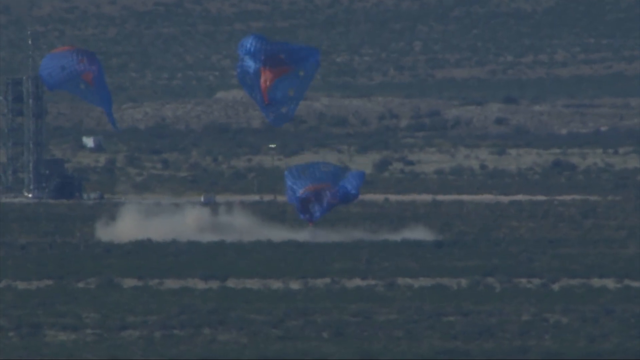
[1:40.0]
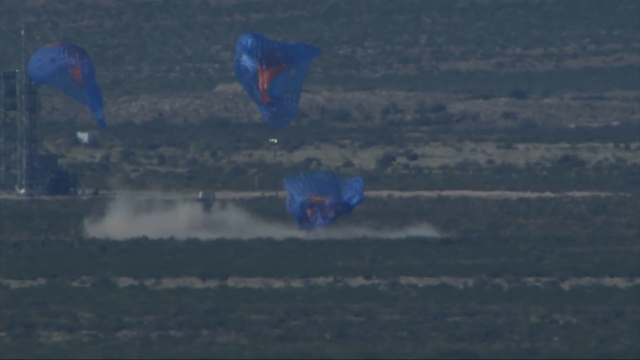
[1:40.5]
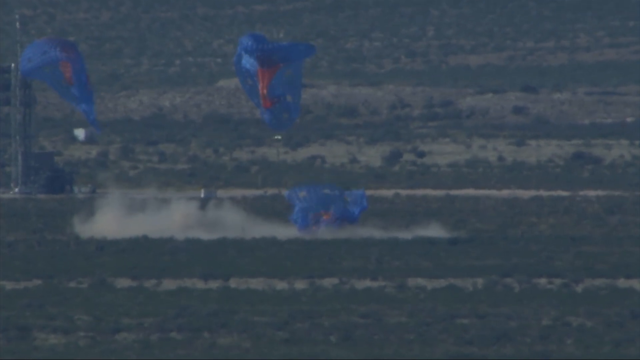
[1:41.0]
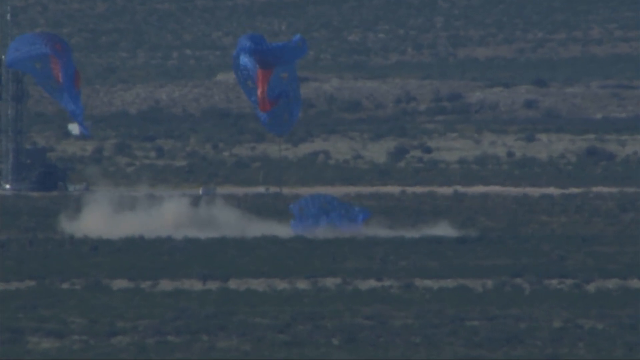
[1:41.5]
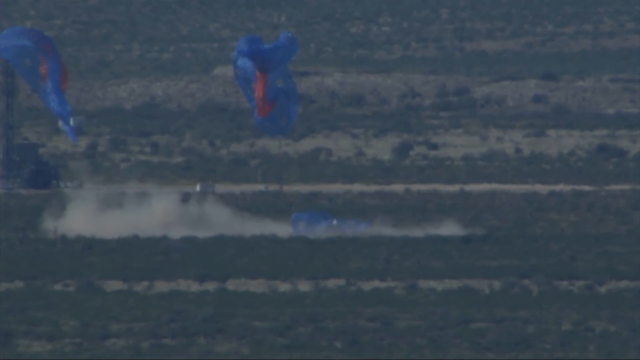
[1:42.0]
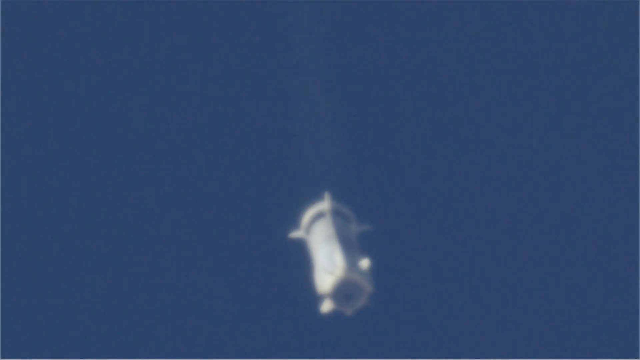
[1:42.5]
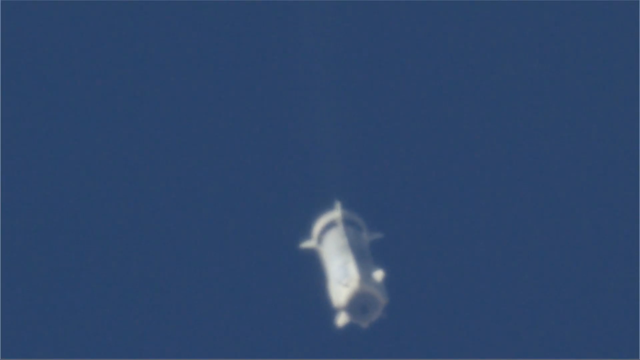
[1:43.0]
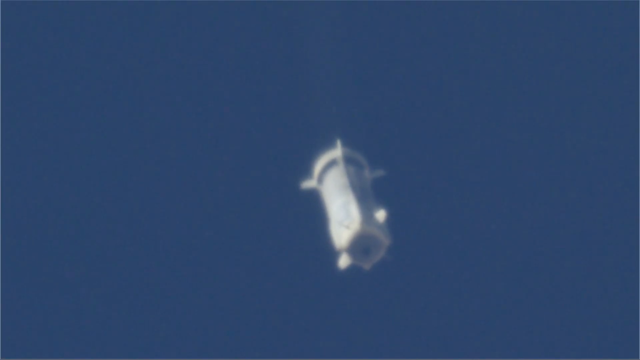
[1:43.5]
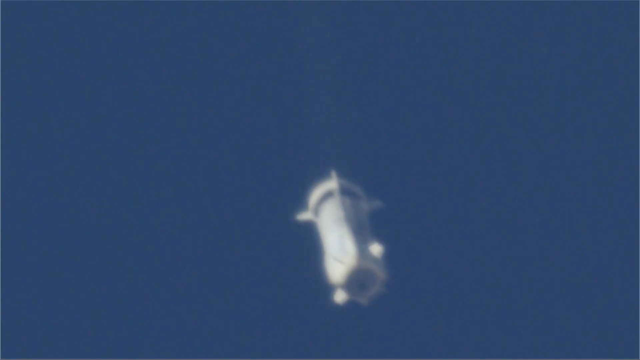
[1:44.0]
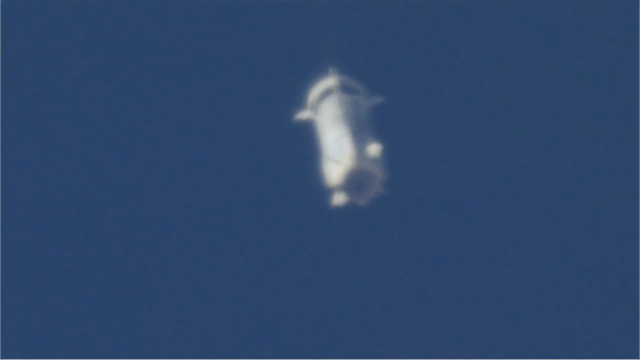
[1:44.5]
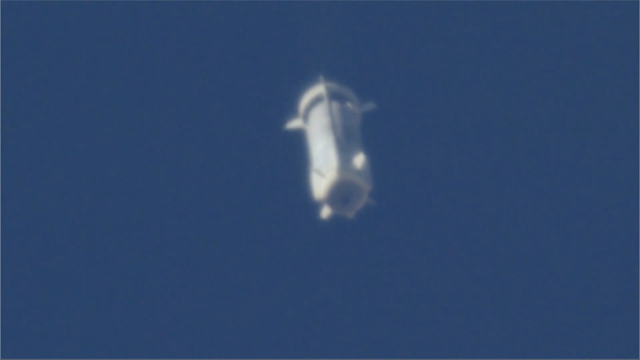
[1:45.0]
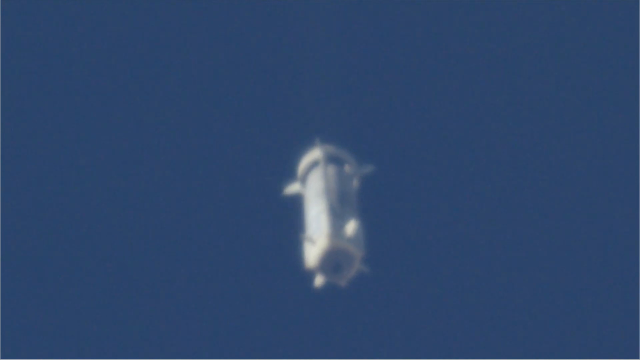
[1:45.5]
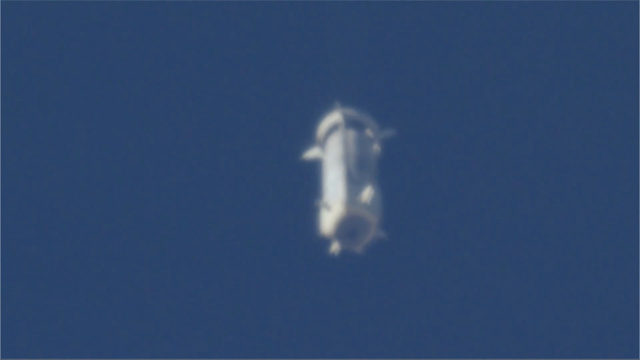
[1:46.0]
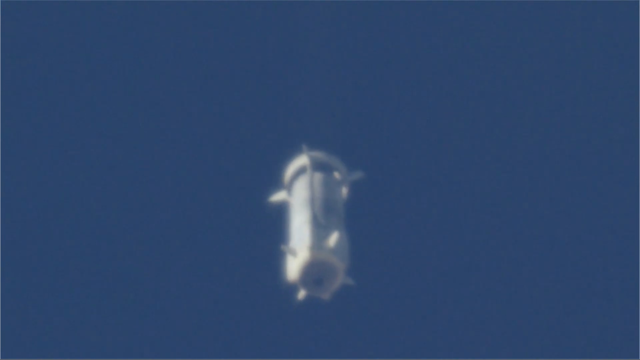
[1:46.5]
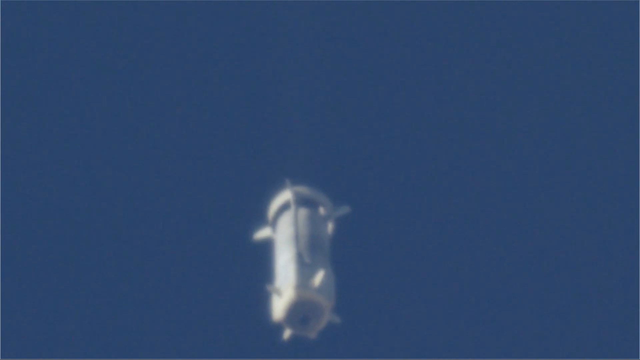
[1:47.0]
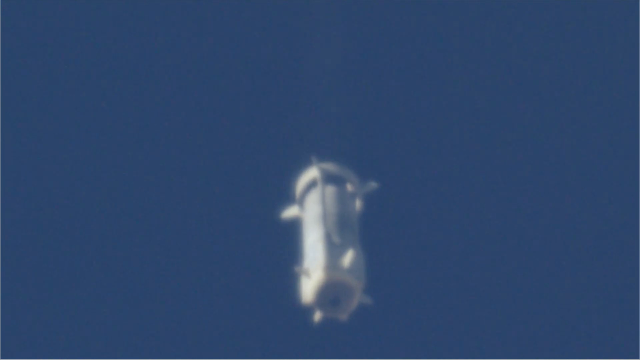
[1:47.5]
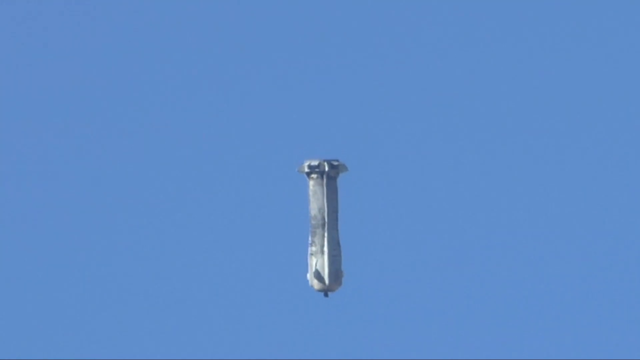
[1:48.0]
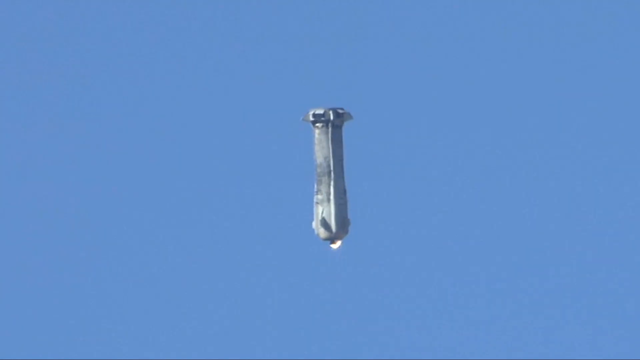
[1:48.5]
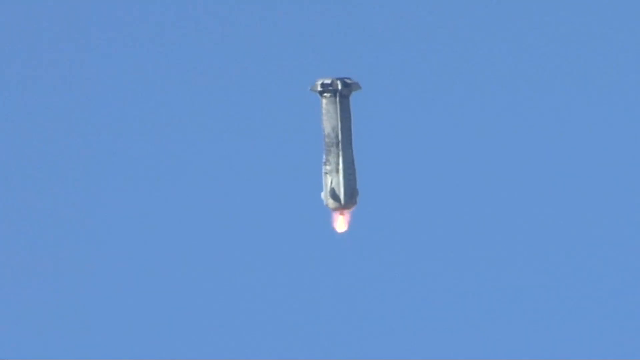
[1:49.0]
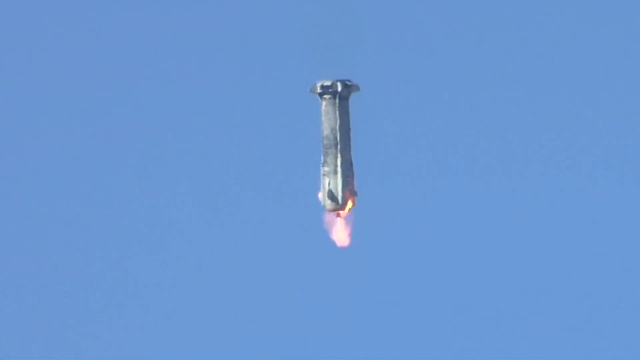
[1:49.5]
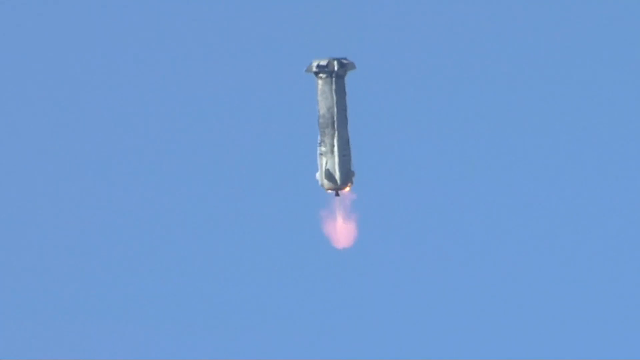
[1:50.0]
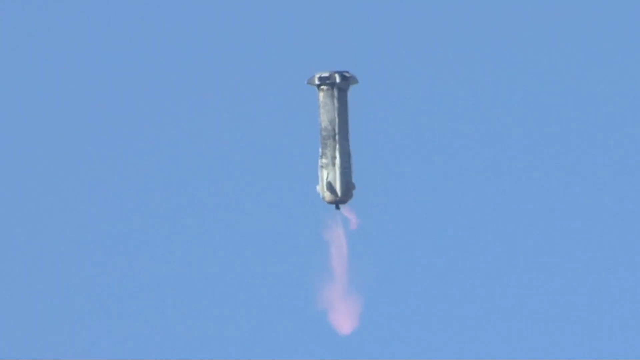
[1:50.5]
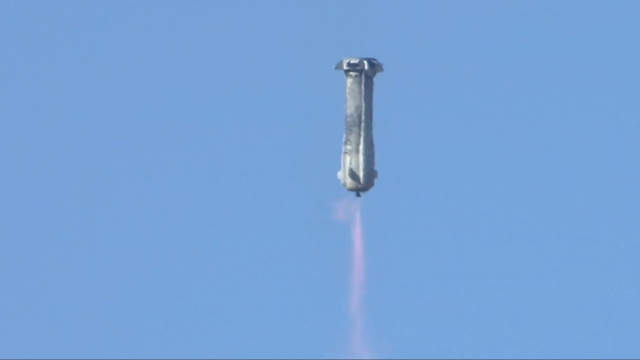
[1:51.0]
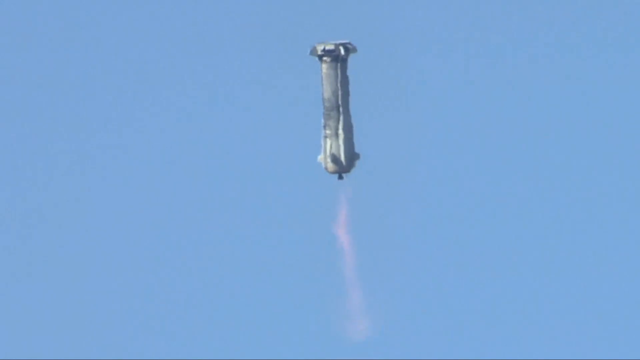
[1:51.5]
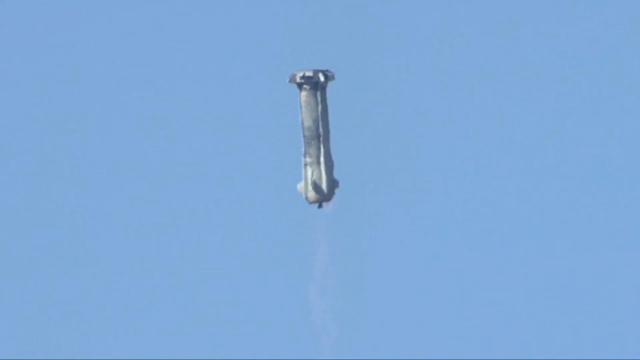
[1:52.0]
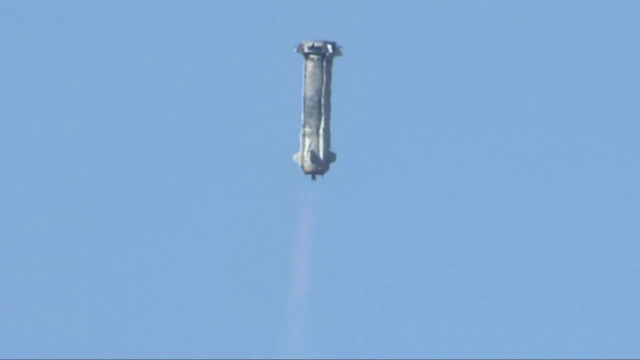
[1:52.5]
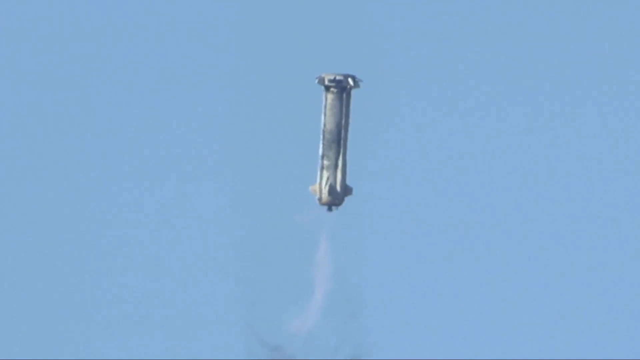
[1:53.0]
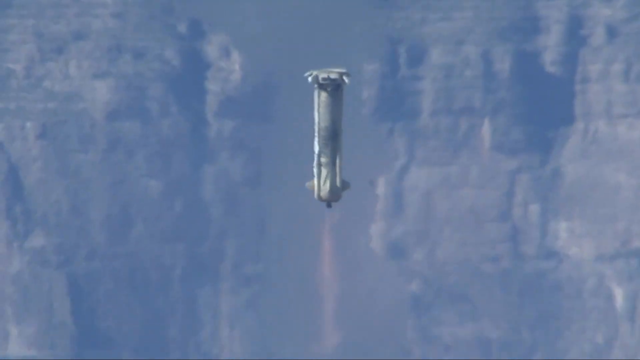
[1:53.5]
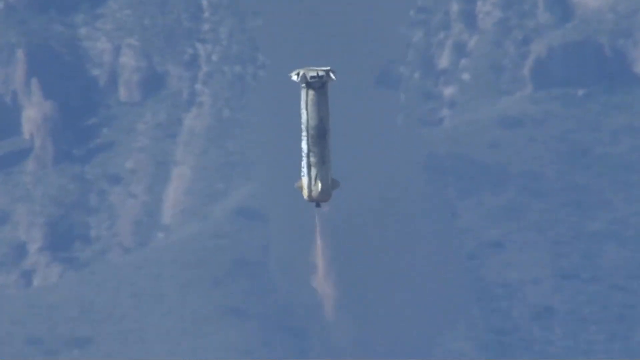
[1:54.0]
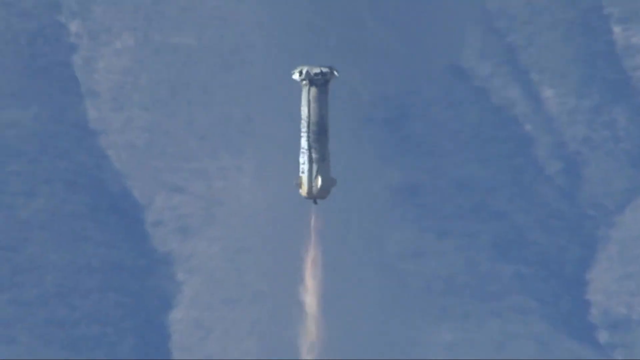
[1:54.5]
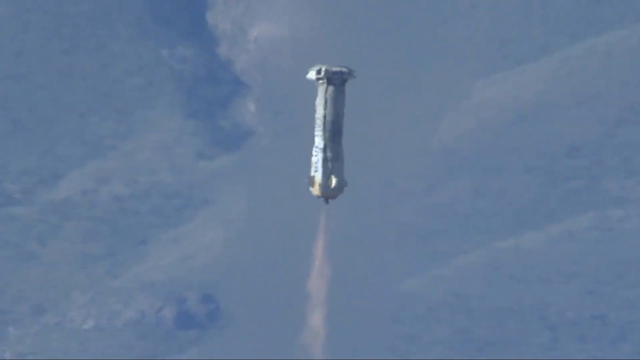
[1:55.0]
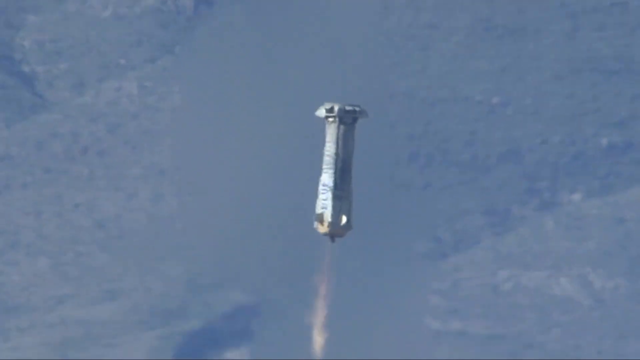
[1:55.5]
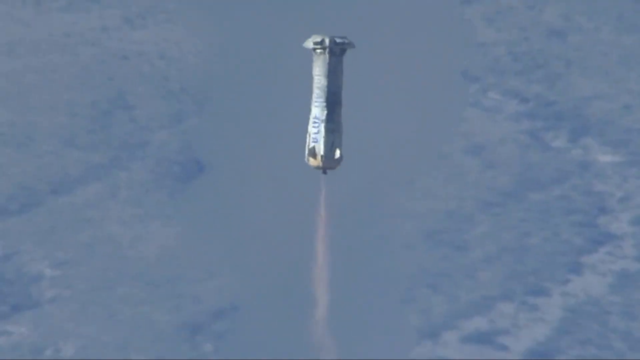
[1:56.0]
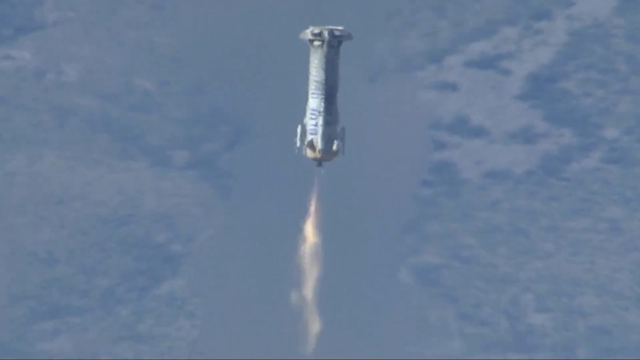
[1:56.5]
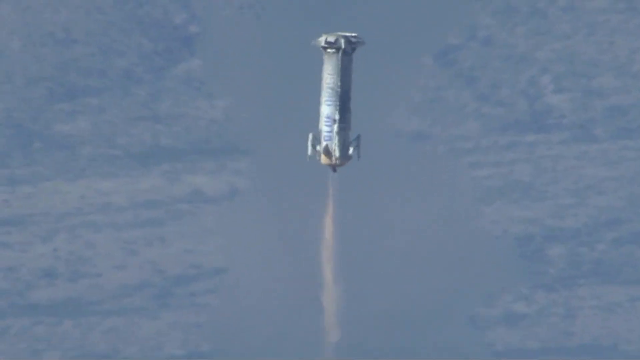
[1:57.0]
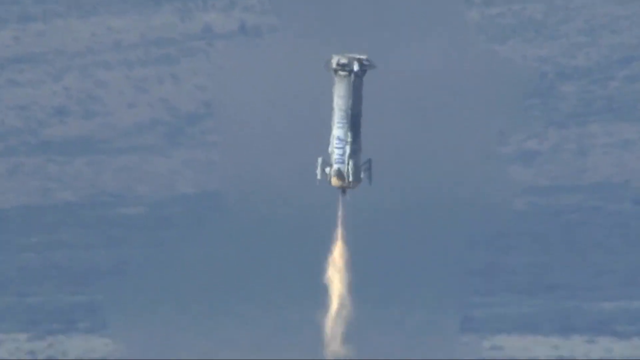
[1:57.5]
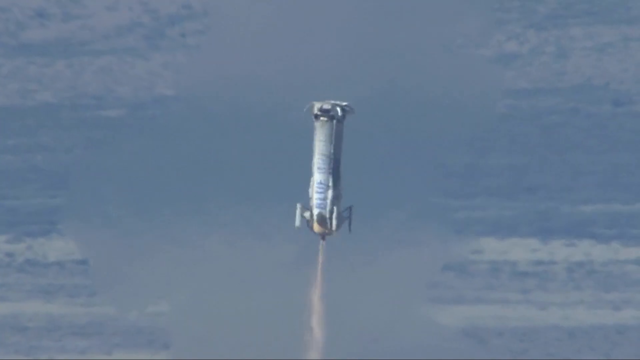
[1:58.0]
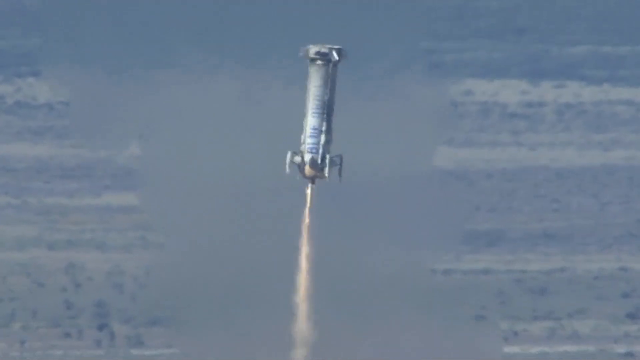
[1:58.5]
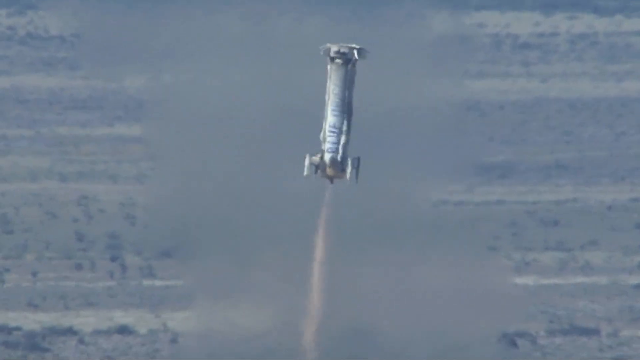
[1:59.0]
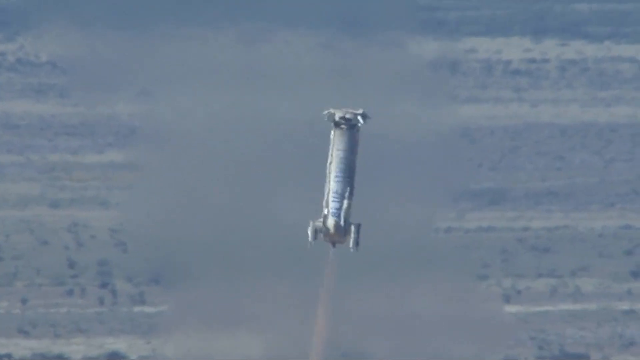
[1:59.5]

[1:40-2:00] The capsule has landed, with the barren, scrubby desert landscape in the background. The capsule itself is obscured by the quite large dust cloud it has kicked up. In the far left back is the metal scaffolding that held the rocket in place earlier. The three parachutes, now completely opened, drift slowly down behind the capsule; they are mostly blue with red and orange centers. The view then shows the part of the rocket that launched the capsule, continuing its descent toward Earth straight up and down as the camera follows it. A bit of flame begins to come out from its bottom and shoot downward, slowing the falling rocket piece, and as it gets closer to the Earth it slows even more. Landing gear disengages from the side and opens up, and the rocket nears its landing site on the ground.